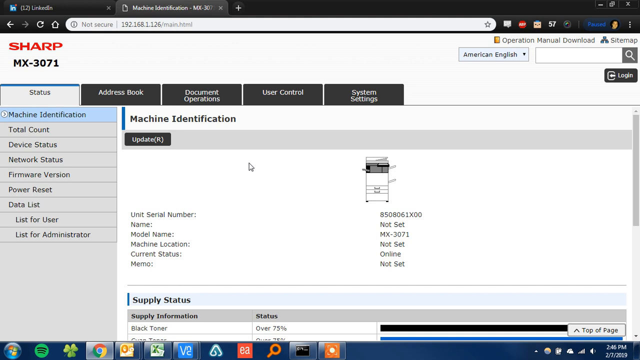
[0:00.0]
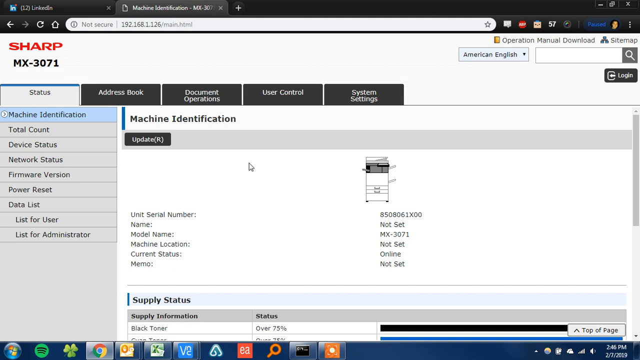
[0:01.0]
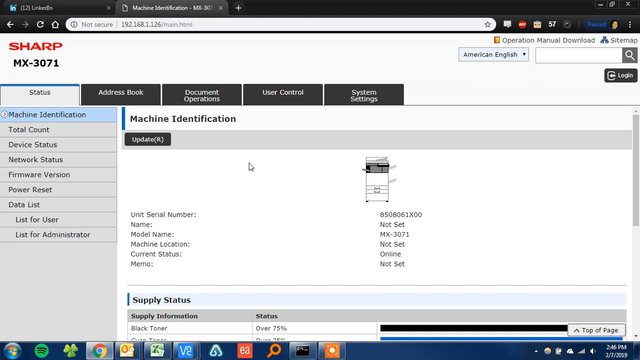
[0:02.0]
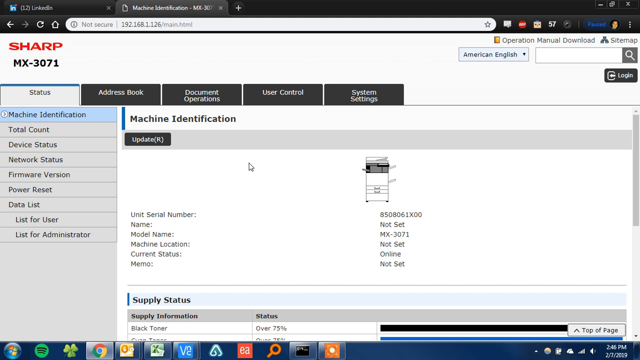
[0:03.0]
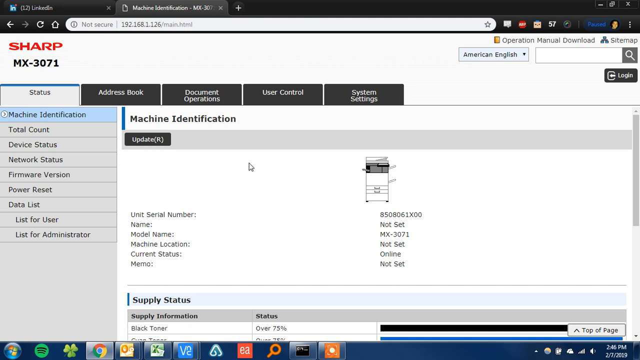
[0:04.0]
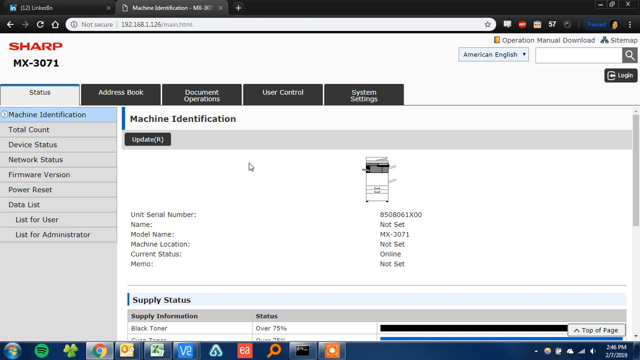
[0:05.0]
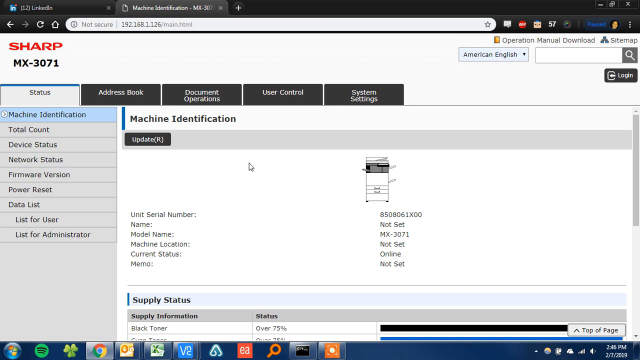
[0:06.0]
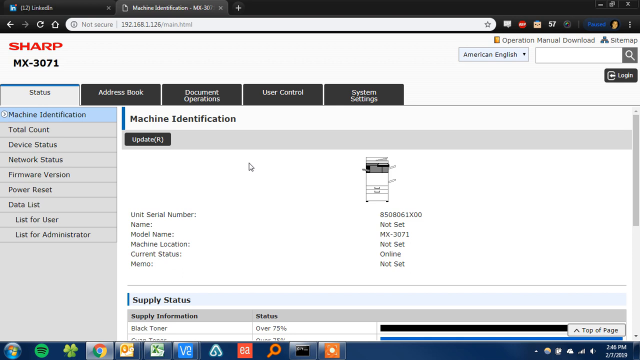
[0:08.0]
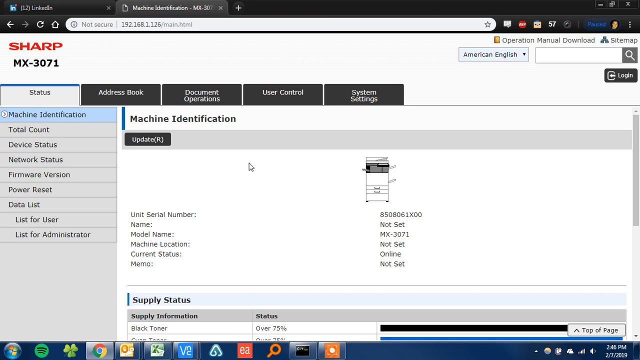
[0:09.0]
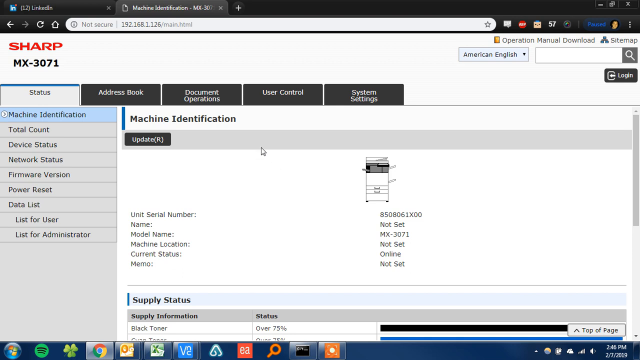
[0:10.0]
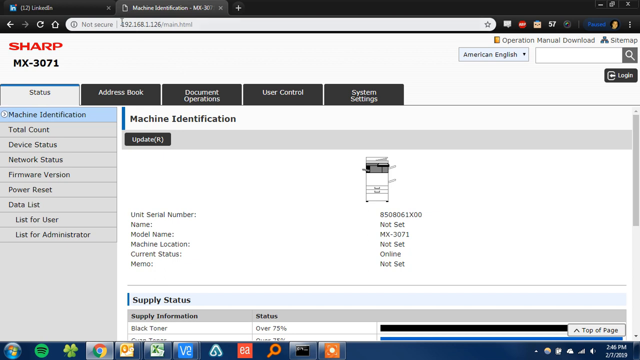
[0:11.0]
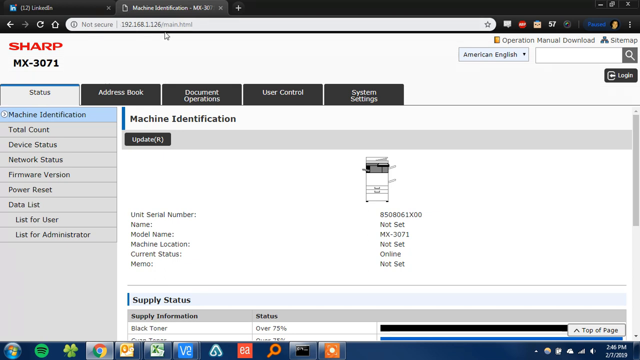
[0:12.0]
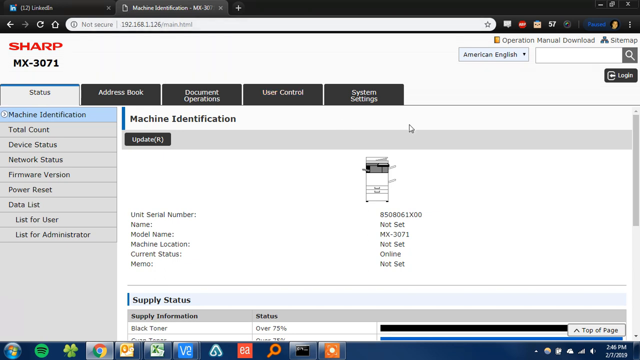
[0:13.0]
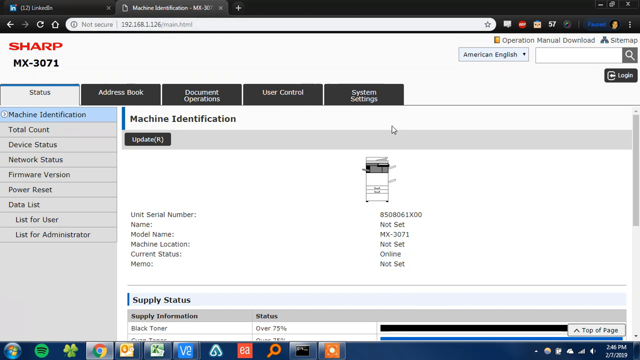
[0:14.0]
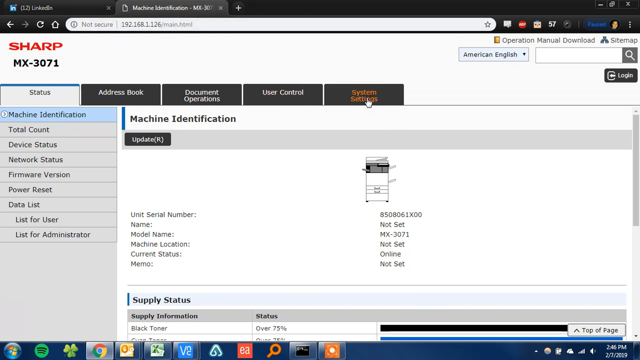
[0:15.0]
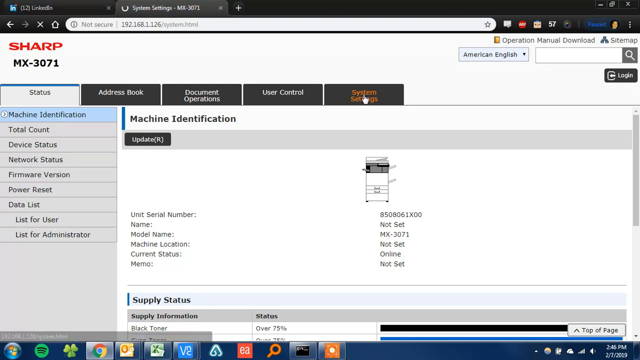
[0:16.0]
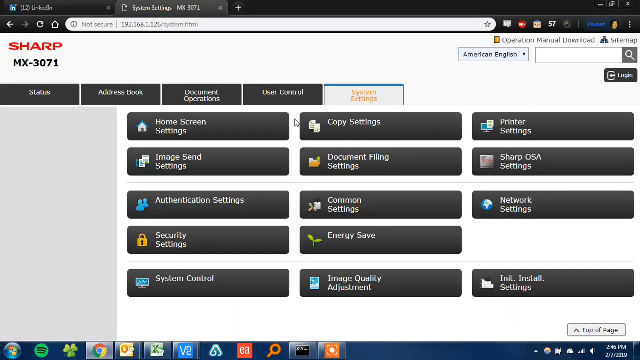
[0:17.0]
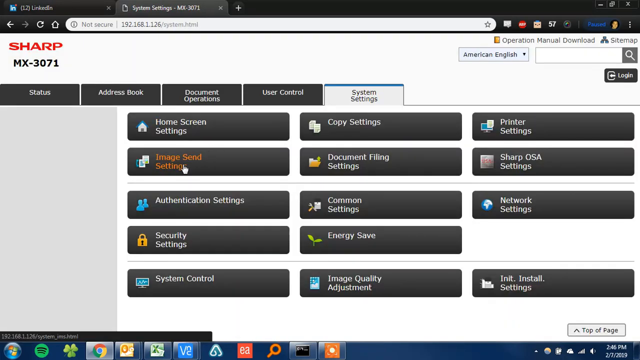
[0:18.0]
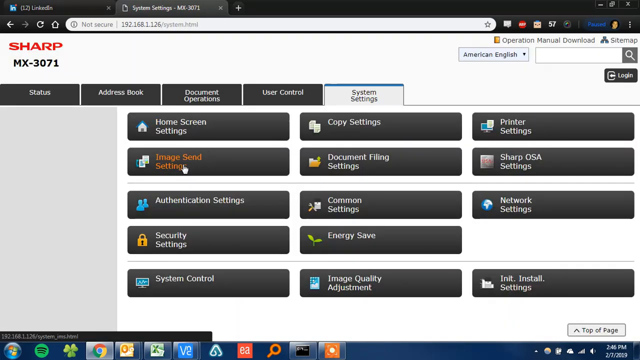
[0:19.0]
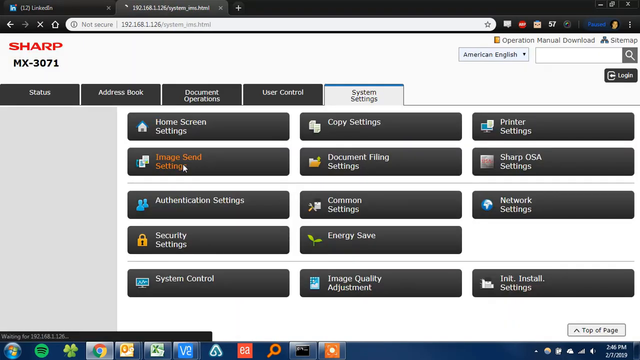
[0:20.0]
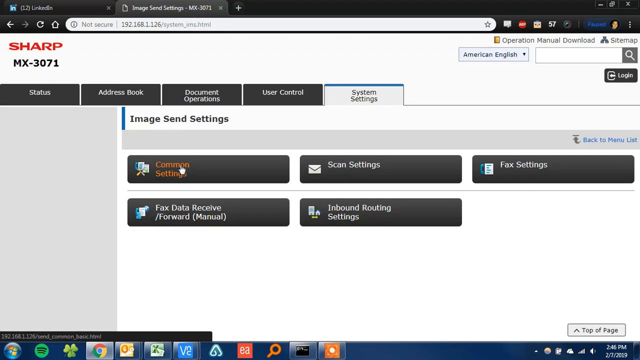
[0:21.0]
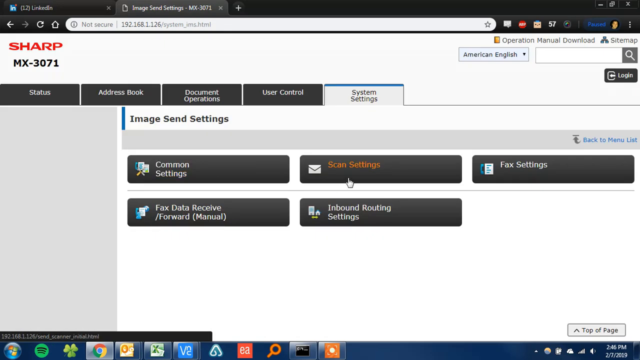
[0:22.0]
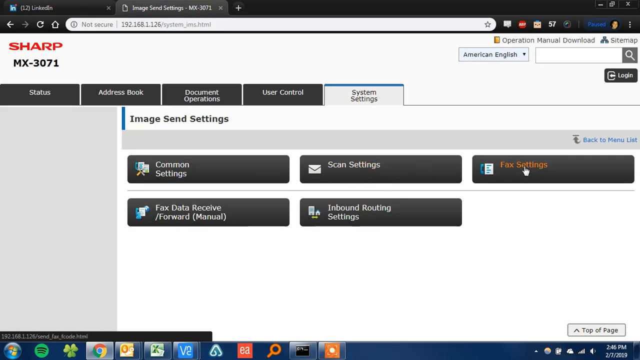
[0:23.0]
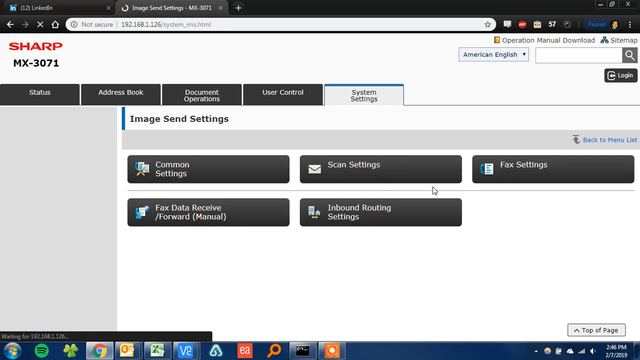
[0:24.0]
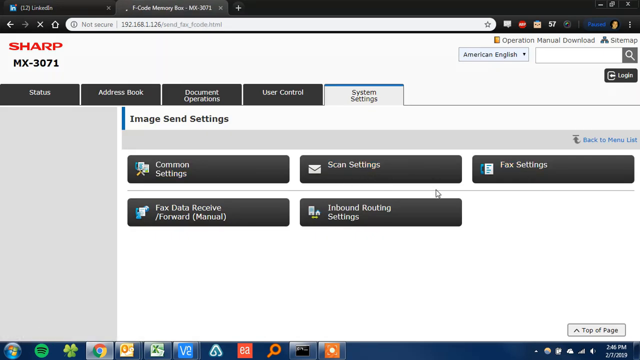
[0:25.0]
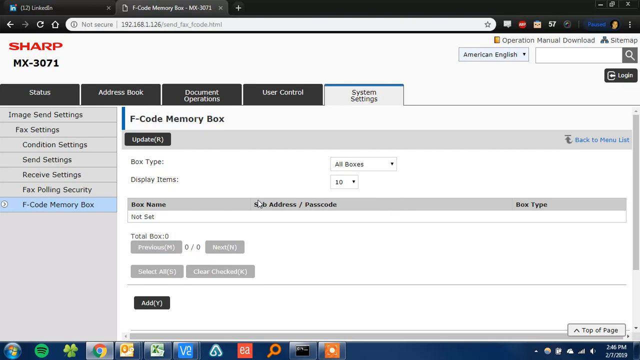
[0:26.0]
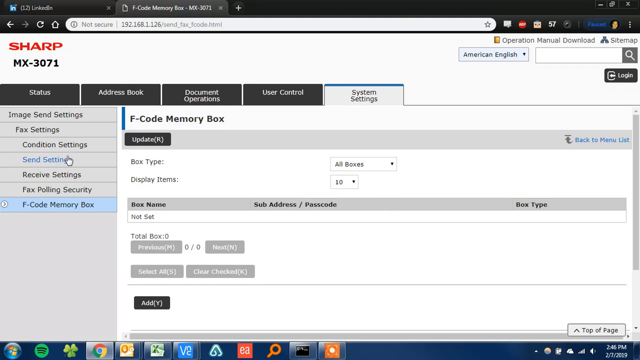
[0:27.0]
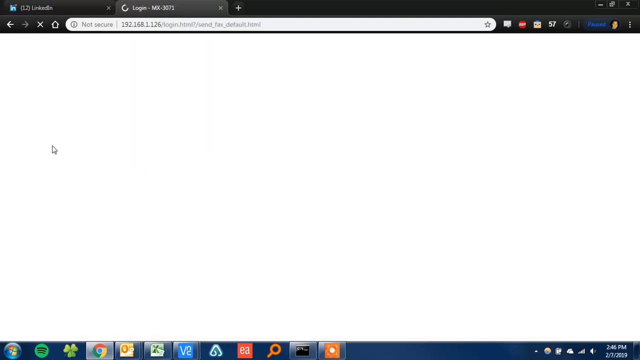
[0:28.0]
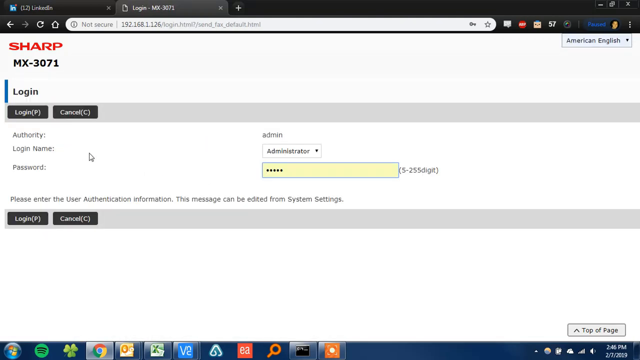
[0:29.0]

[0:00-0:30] What appears to be a screen recording of a computer shows two tabs open, with the active tab on the Sharp website for an MX 3071. The site has four tabs, listed as status, address book, document operations, user control and system settings, and the status tab is selected. Under status are machine identification, total count, device status, network status, firmware reset and data list, and under data list are lists for users and lists for administration. A mouse pointer moves around the screen. The user goes to system settings, and a set of settings appears: home screen settings, document file settings, copy settings, printer settings, Sharp OSA settings and security settings. They click image send settings, which has five more options: common settings, scan settings, fax settings, inbound routing settings and fax data receive forward manual. They click fax settings and then go to F code memory box.